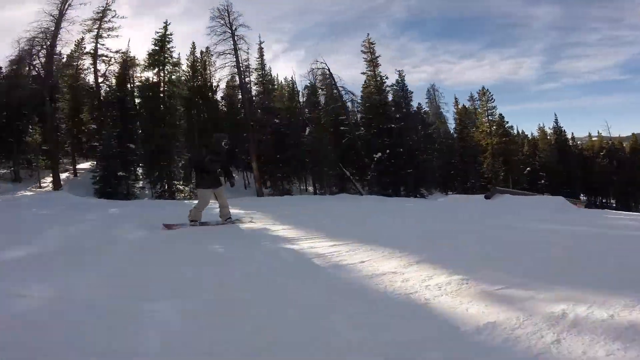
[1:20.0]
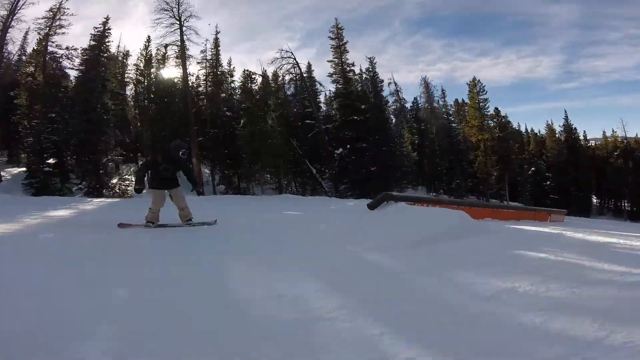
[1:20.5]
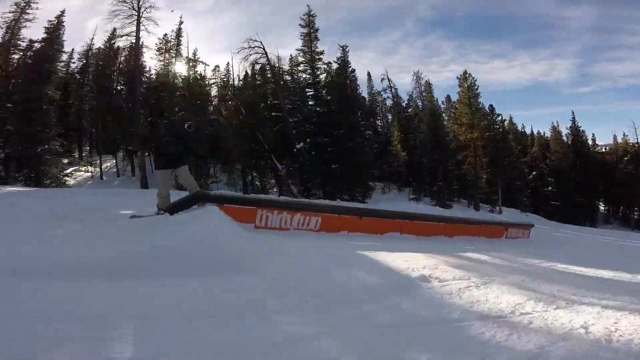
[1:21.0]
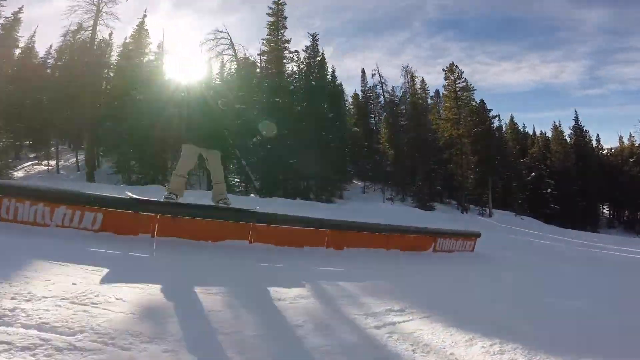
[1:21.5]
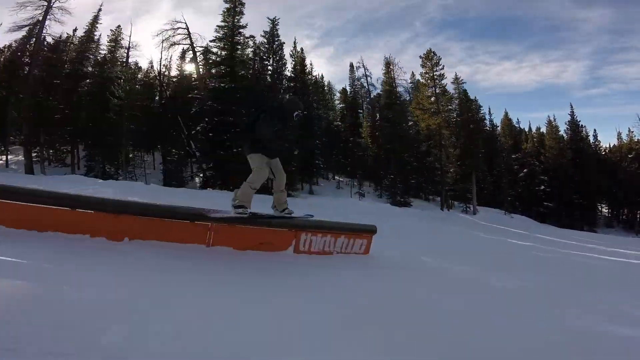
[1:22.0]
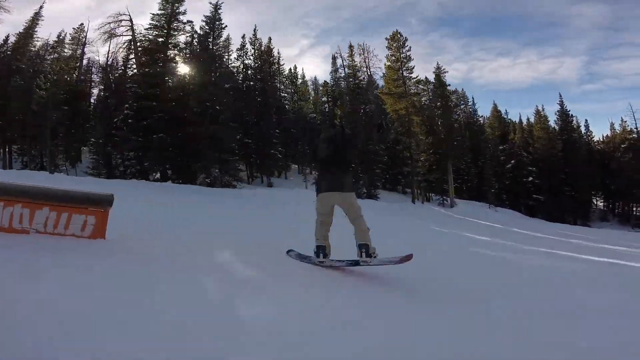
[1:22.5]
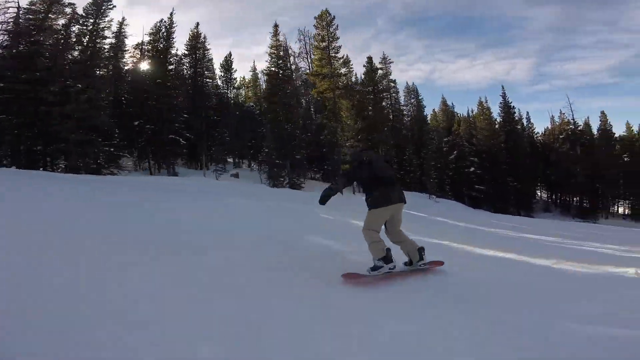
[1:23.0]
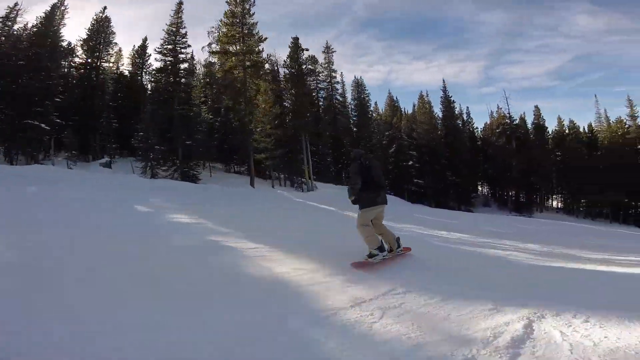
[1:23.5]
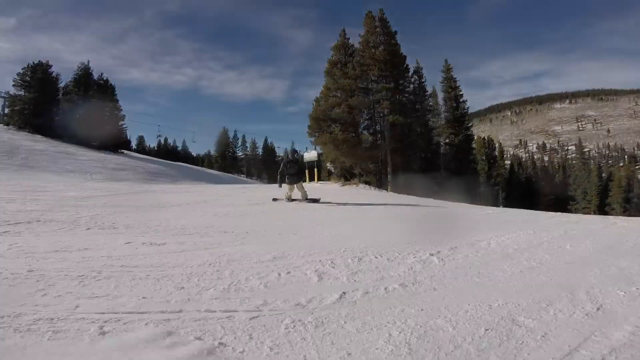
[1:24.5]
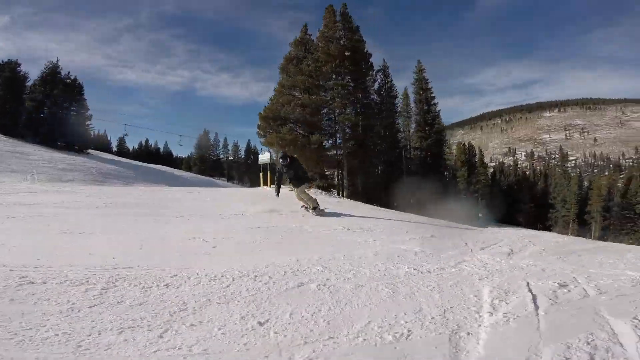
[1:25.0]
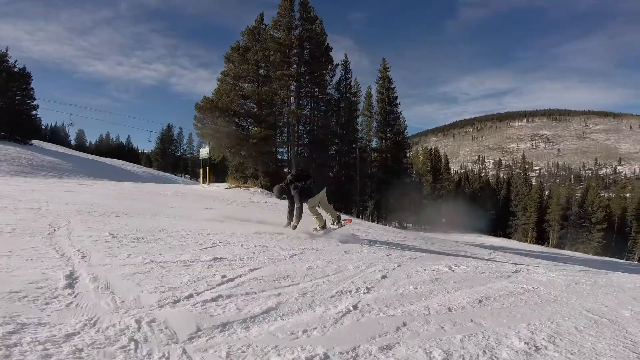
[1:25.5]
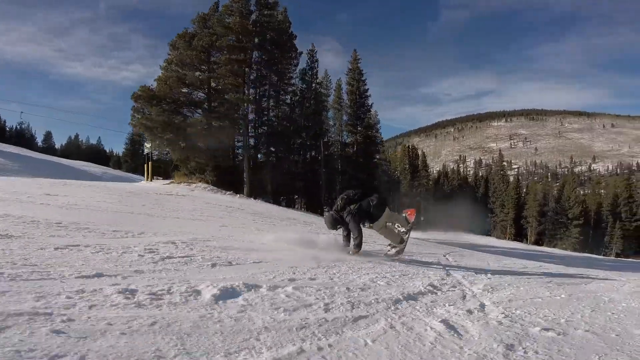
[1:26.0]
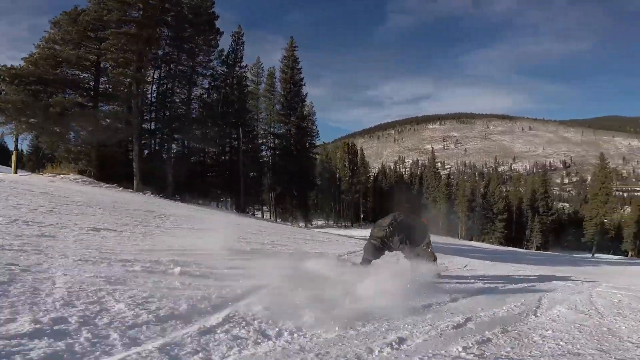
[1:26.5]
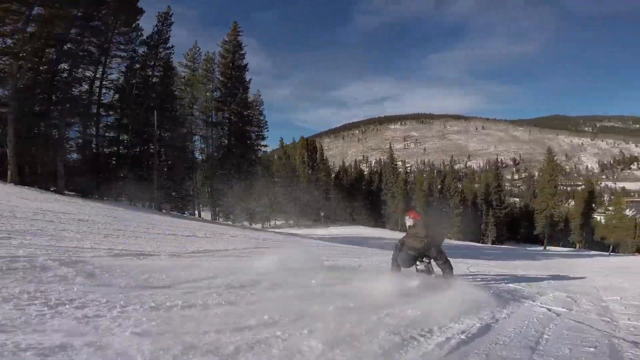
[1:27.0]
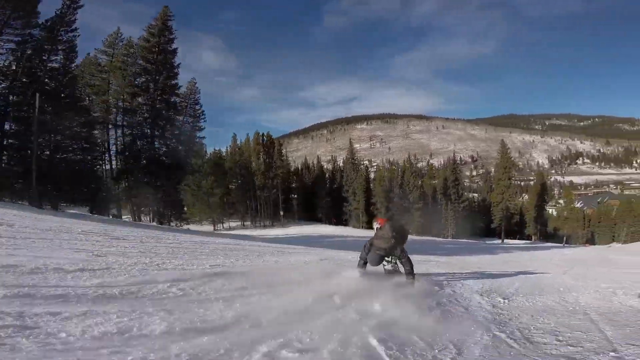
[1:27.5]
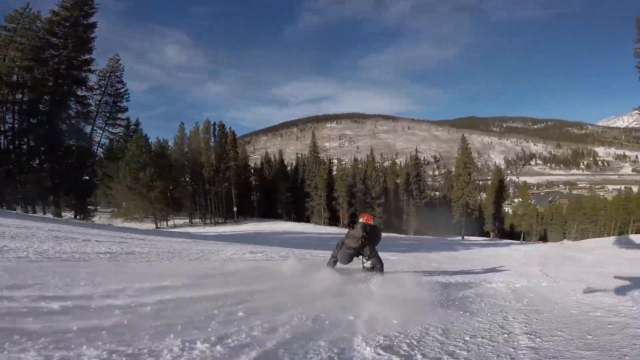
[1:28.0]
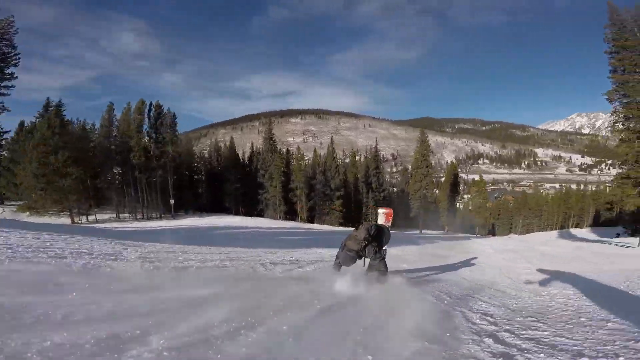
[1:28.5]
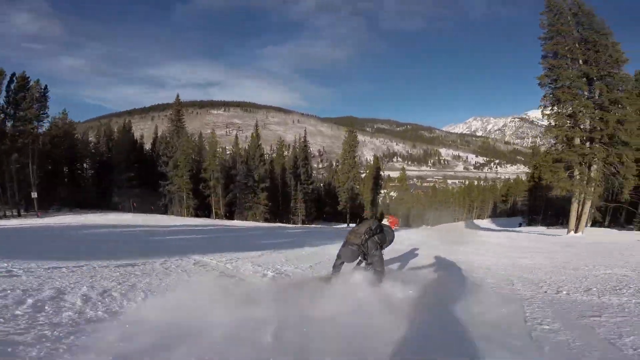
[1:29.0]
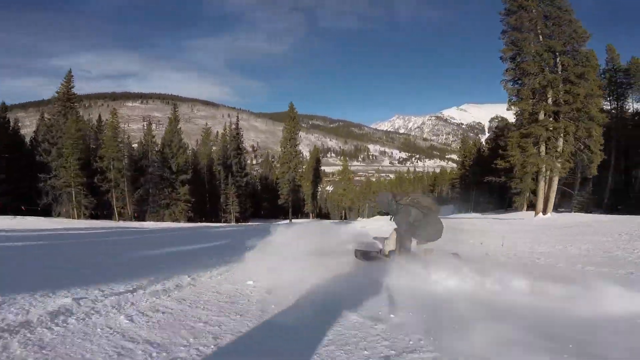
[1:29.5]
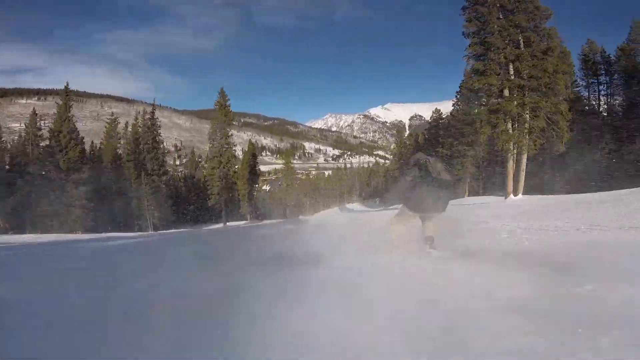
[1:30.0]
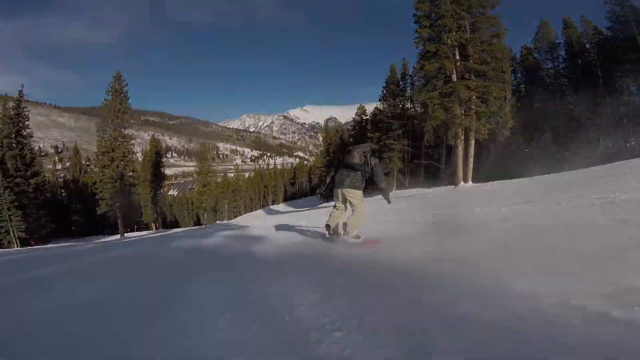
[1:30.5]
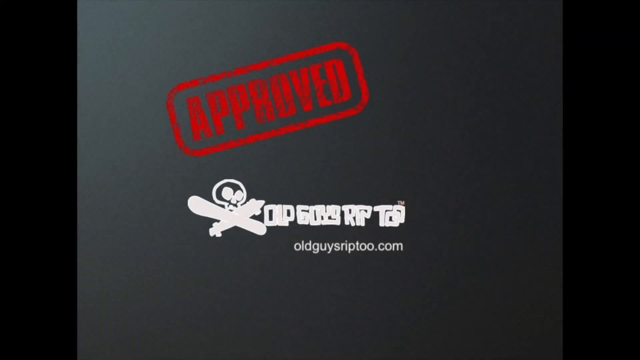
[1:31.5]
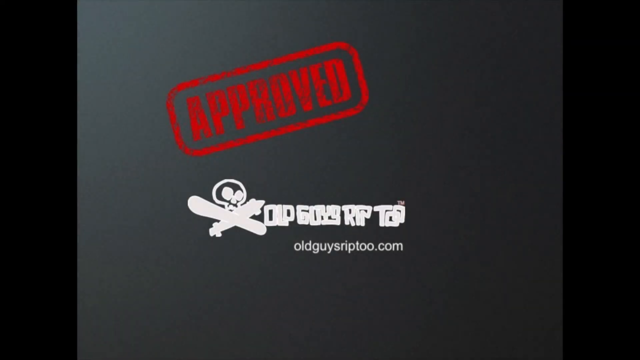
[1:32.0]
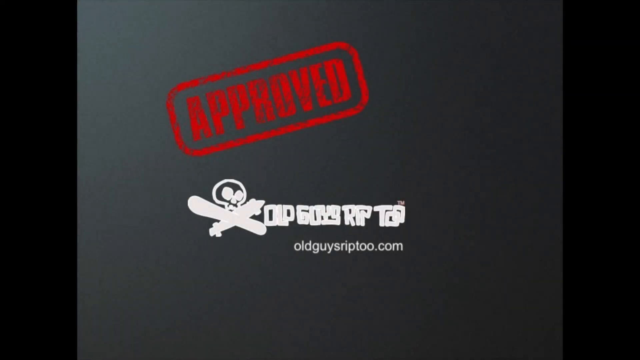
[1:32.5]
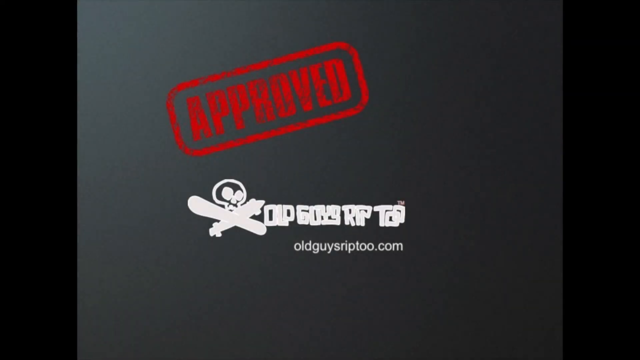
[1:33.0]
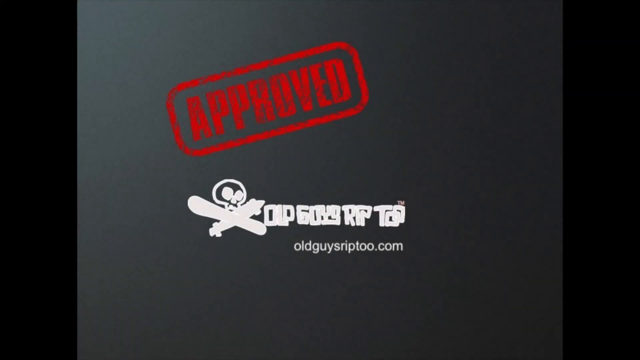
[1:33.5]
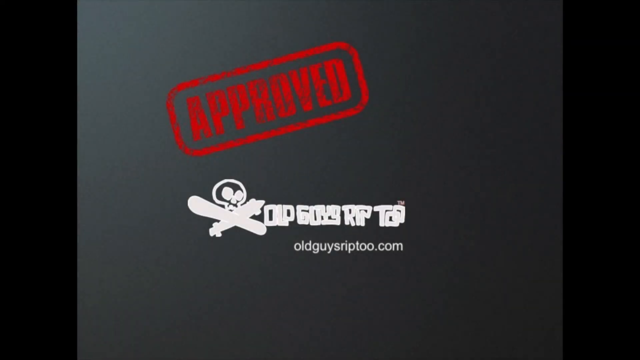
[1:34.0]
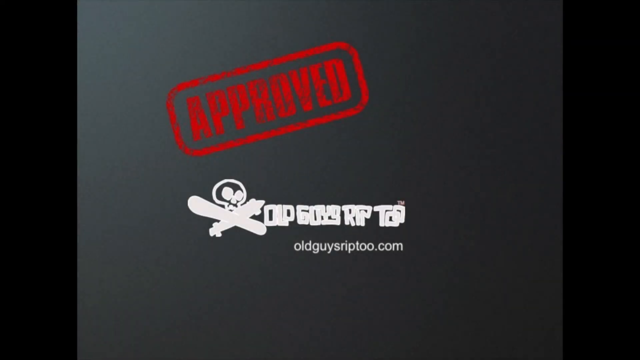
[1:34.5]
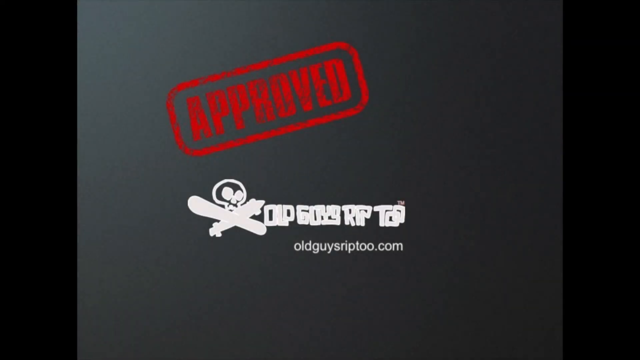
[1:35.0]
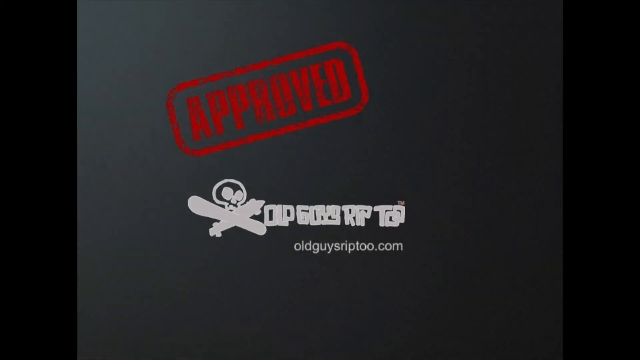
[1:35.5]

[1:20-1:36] A side shot shows a snowboarder going across the snow with some trees in the background. He goes up onto a black pipe held up by an orange structure underneath, slides all the way across it, and spins in a circle before coming off the edge. Back on the snow, he turns toward the left so his board faces toward the right. The front of the snowboard ends up behind him, pointing almost straight up, with both of his hands on the ground in the snow, kicking up quite a bit of snow. He rides this way down the hill for quite a ways before straightening himself out, getting up straight again, and slaloming down the hill. Then a screen pops up reading "APPROVED" in red letters, tilted toward the left, with a red line around it at the bottom, and the logo and the website address "oldguysriptoo.com" underneath.